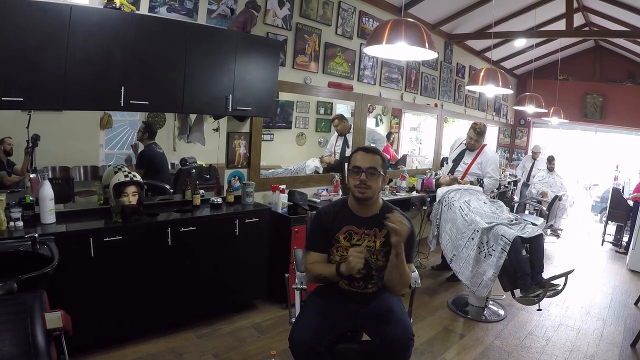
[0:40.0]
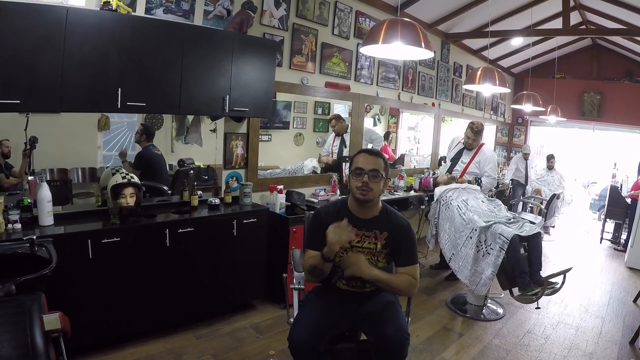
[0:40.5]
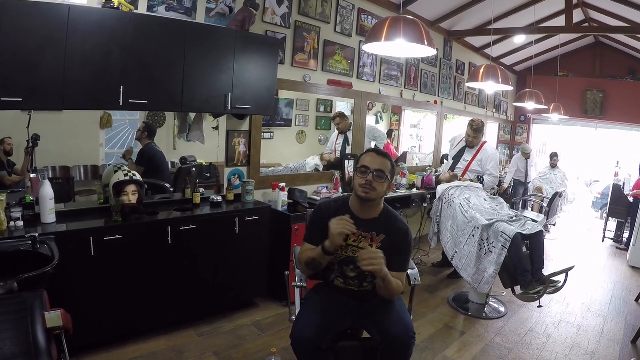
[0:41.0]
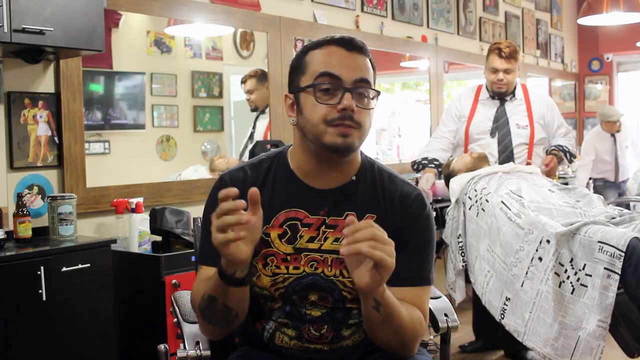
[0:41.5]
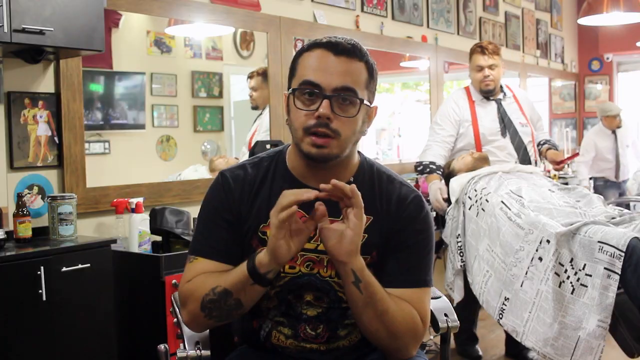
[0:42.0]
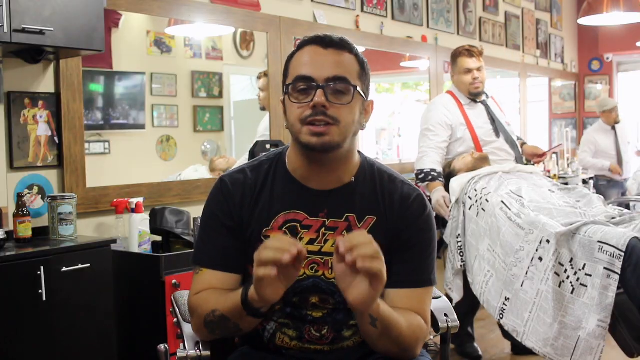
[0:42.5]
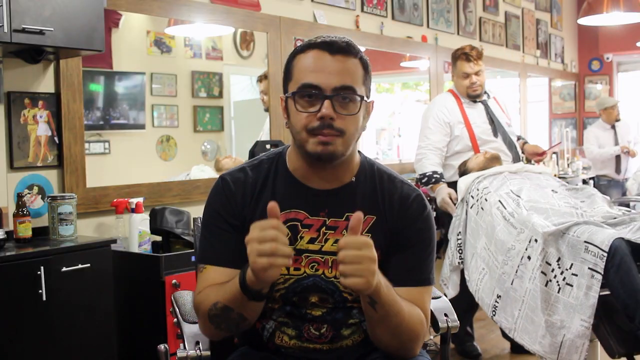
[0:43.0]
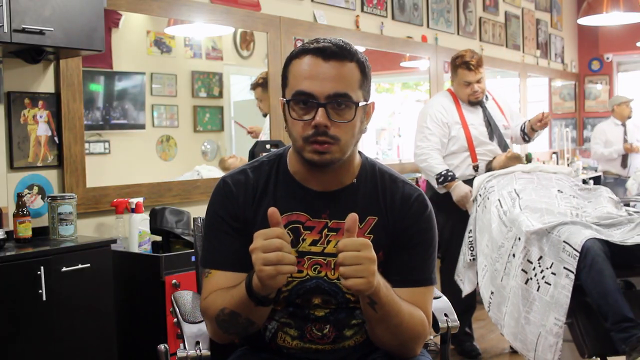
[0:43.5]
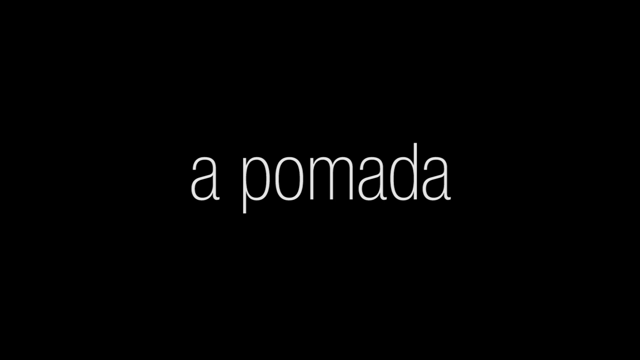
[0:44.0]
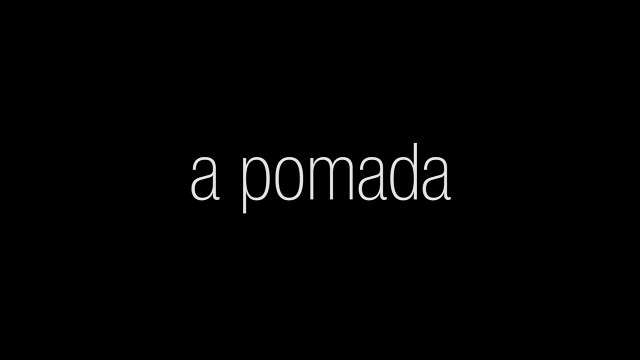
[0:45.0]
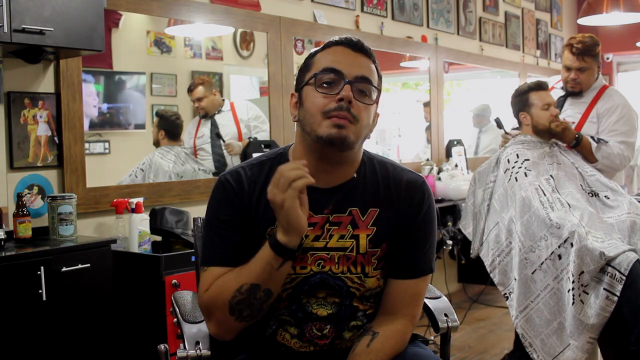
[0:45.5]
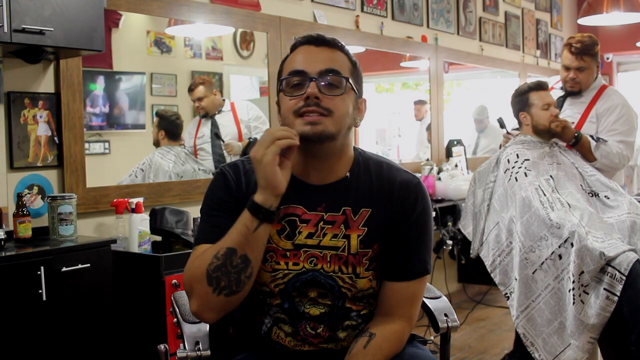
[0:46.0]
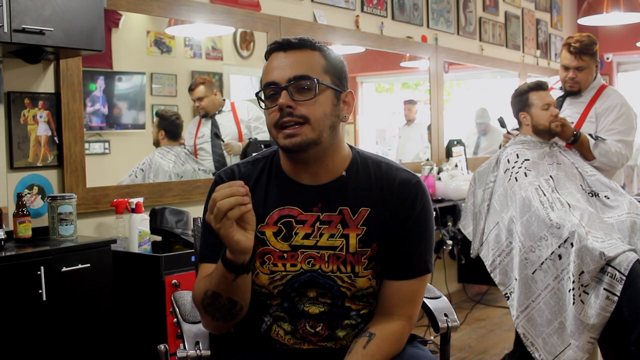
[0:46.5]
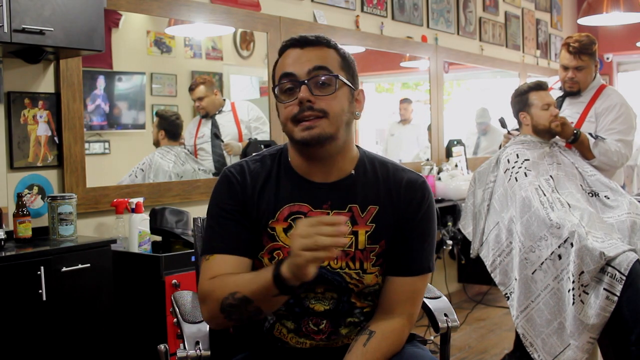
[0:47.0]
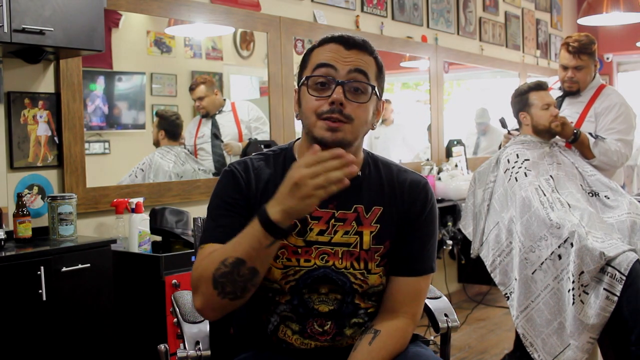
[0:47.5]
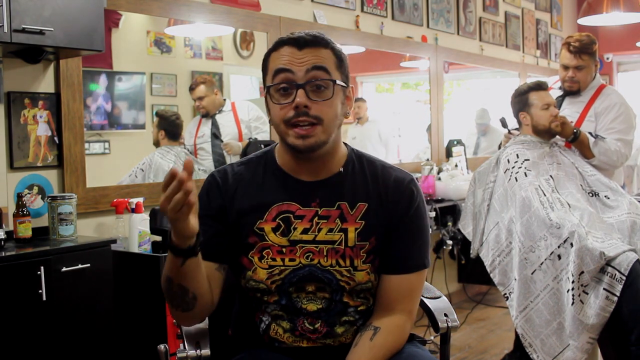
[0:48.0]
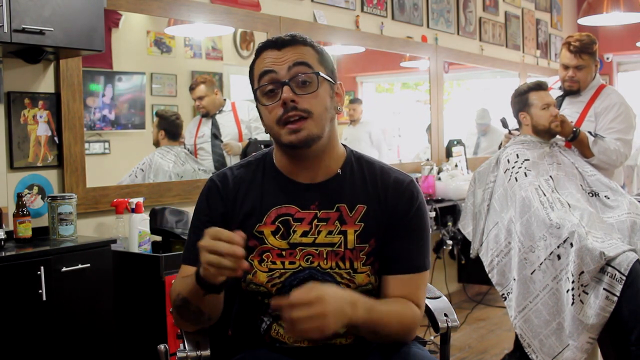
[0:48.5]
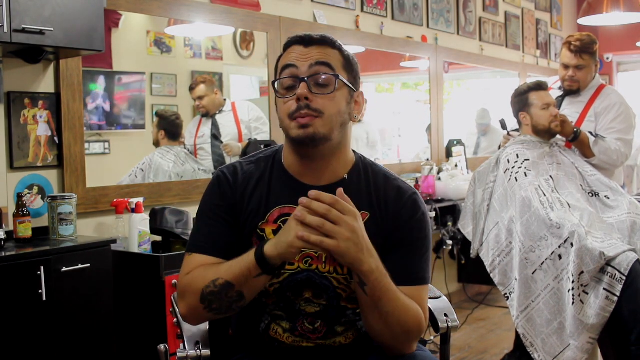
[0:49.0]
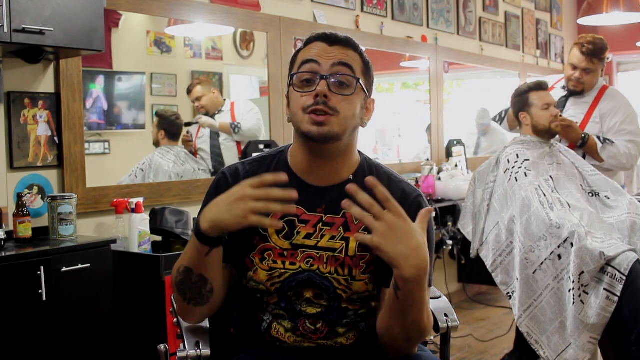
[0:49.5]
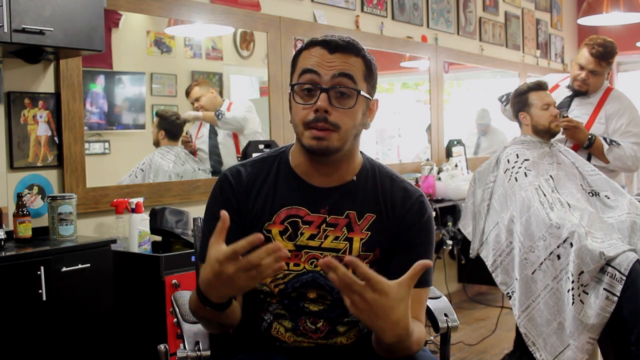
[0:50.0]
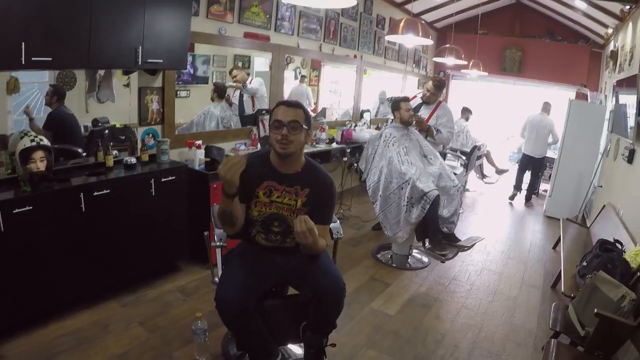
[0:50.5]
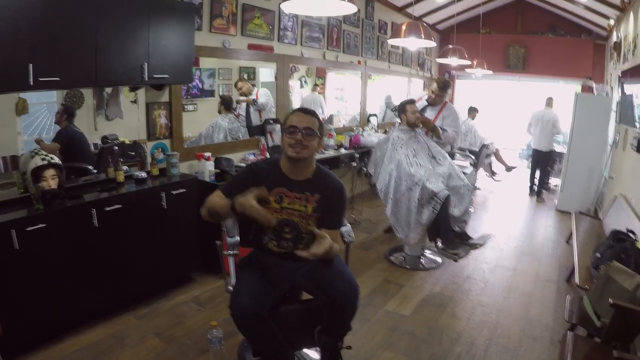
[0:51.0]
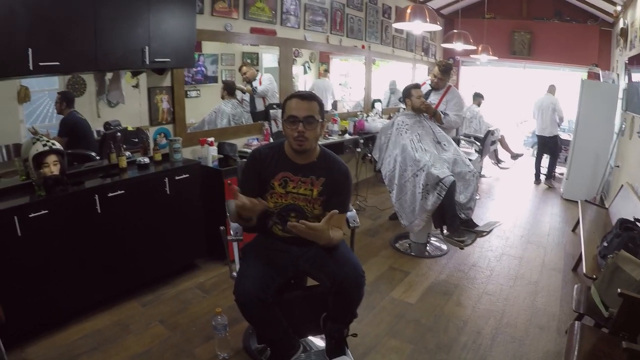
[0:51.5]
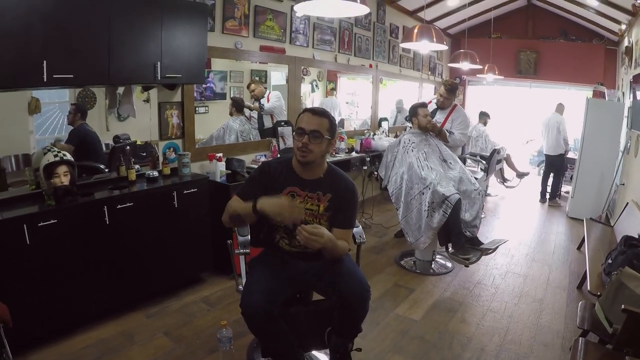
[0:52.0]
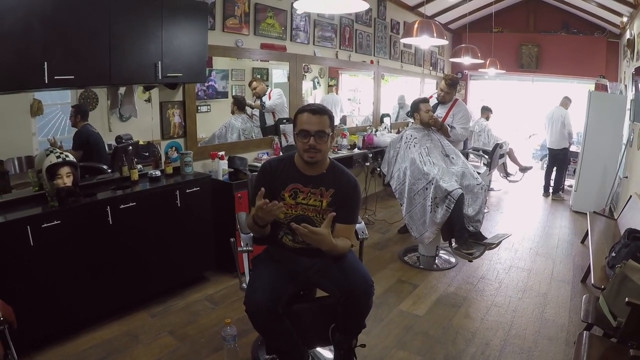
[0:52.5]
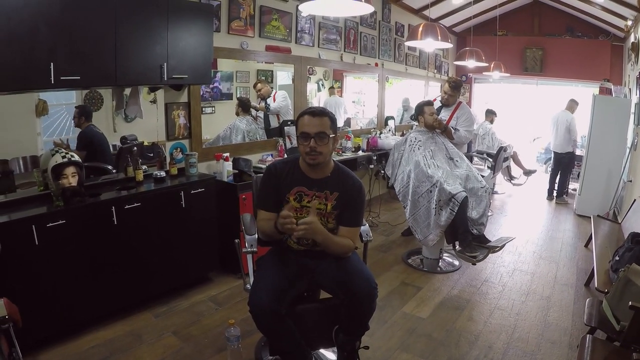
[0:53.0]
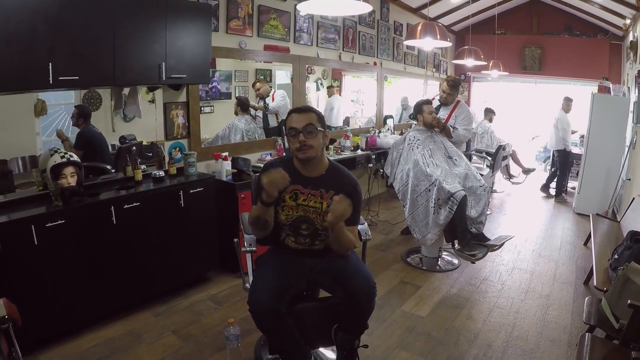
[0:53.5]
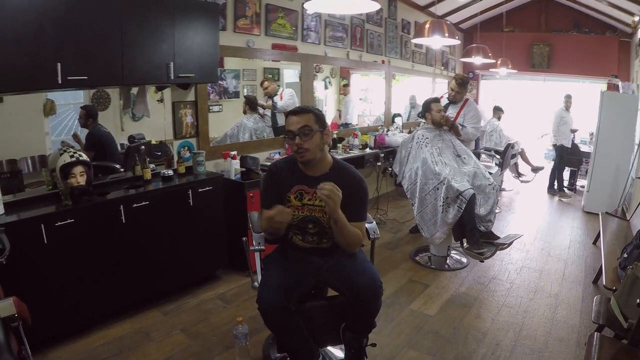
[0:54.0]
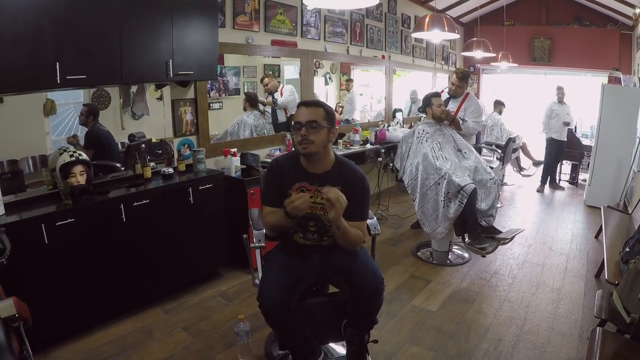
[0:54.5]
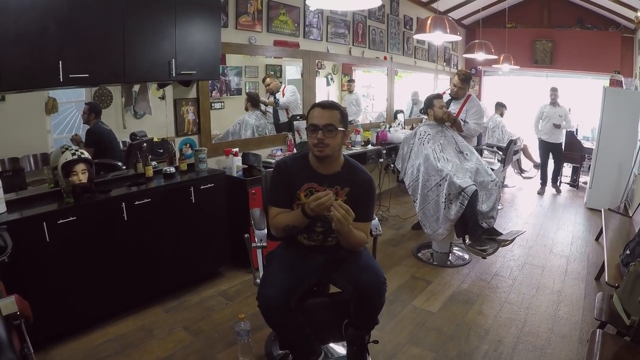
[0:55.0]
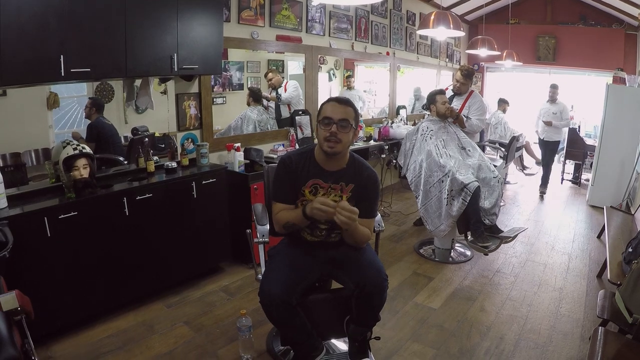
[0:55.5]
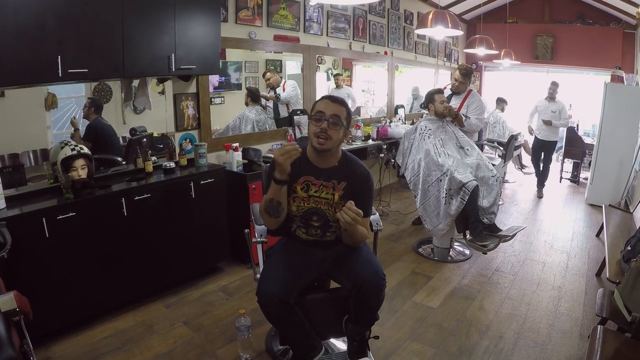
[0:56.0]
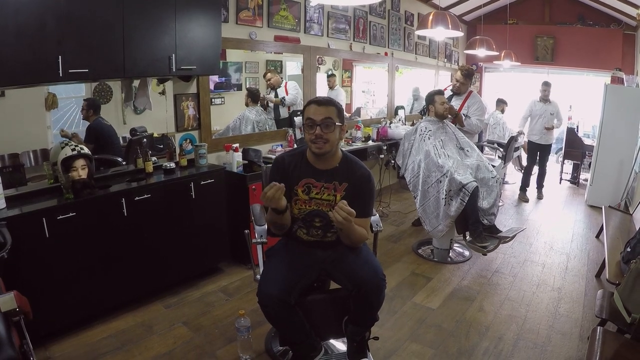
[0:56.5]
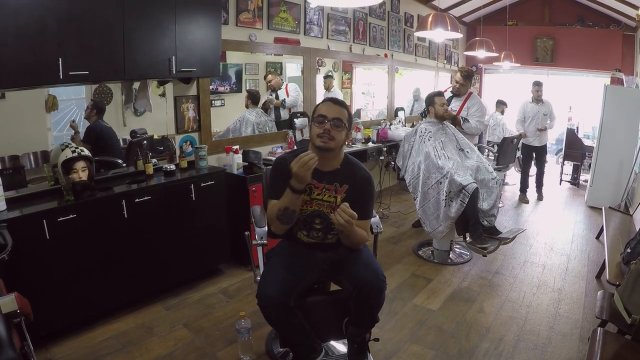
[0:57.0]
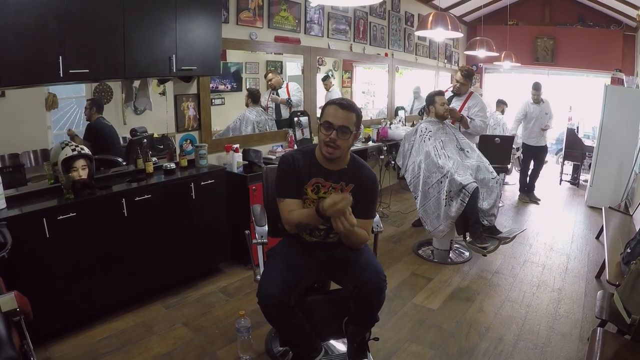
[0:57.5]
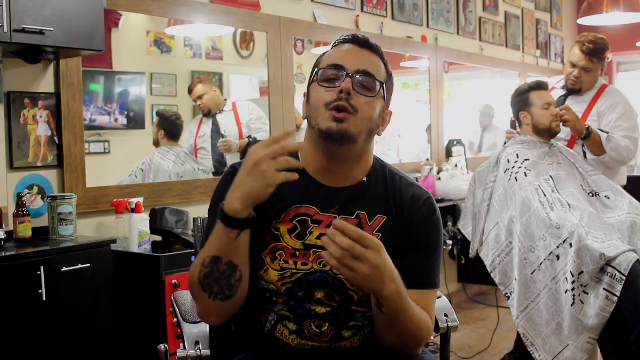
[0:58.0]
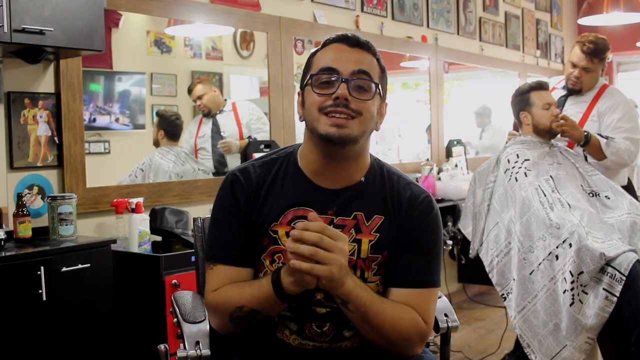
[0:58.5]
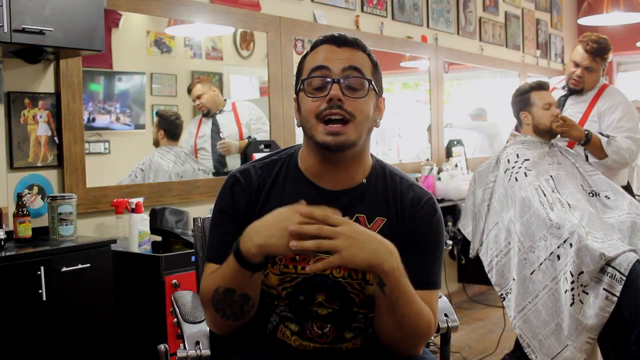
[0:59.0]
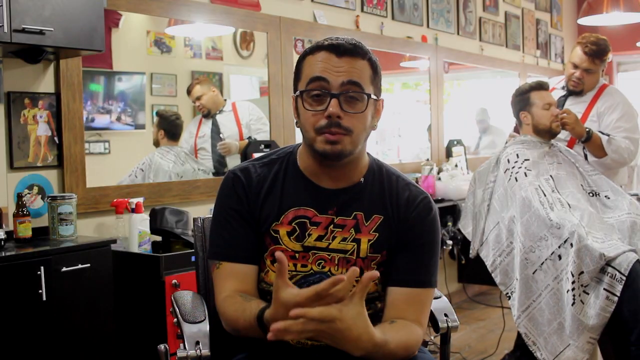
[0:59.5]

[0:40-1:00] A man sitting on a chair introduces himself on the screen and speaks using body language. He wears brown and black clothes: a black t-shirt with yellow stuff on the front and black trousers. He appears to be advertising the place, which looks like a salon, with people working in it. In the background a lady in a red t-shirt opens the fridge. A fat man wearing a white shirt with a red belt on top of it is combing somebody's beard; the place seems to be a salon where people's hair is fixed. Another man, also in a white shirt and black trousers, goes to open the fridge. No uniform is visible. Behind there is brown cardboard, and picture frames are all around the place, along with mirrors, a TV and a lamp.